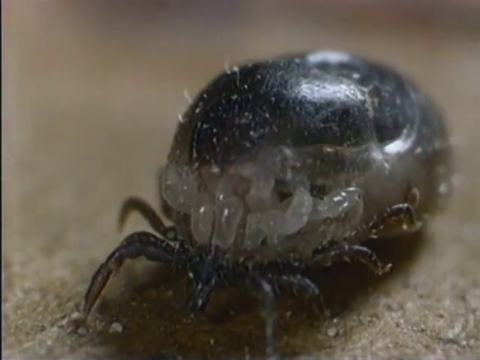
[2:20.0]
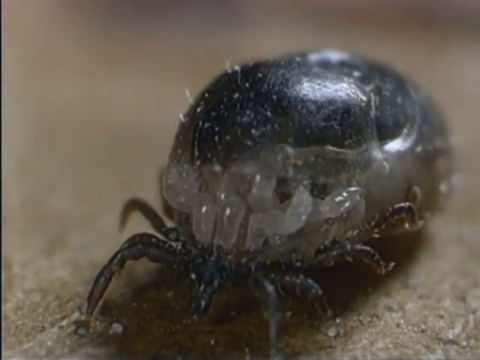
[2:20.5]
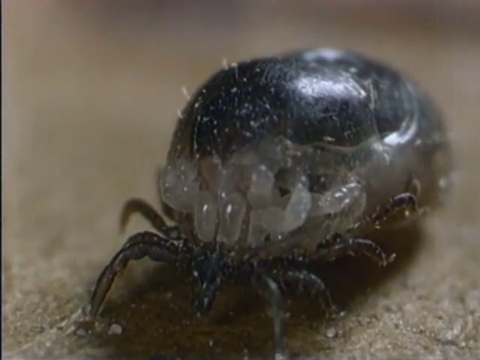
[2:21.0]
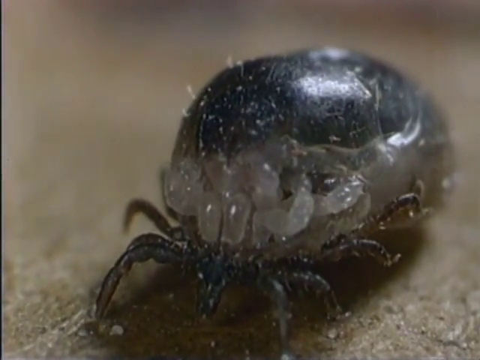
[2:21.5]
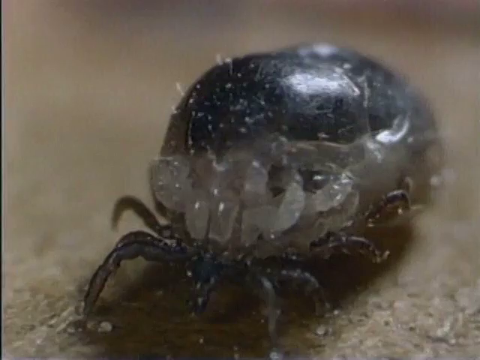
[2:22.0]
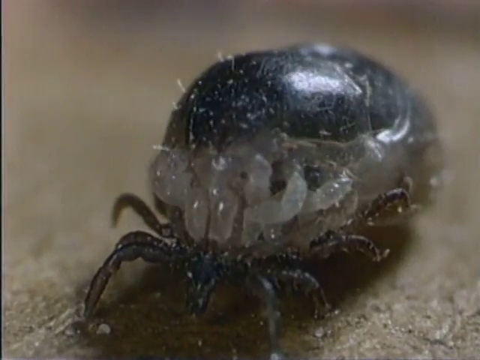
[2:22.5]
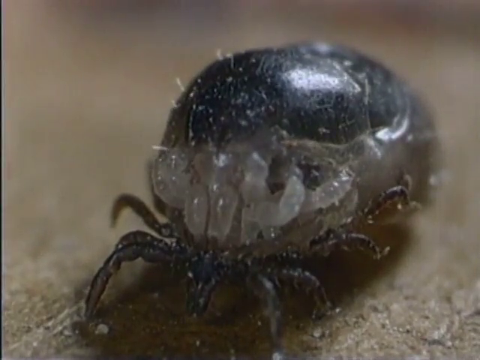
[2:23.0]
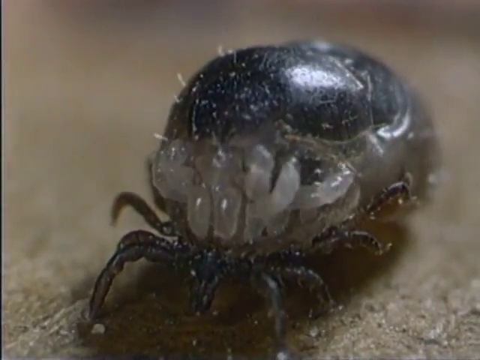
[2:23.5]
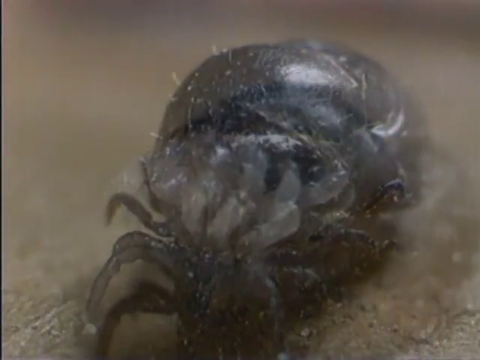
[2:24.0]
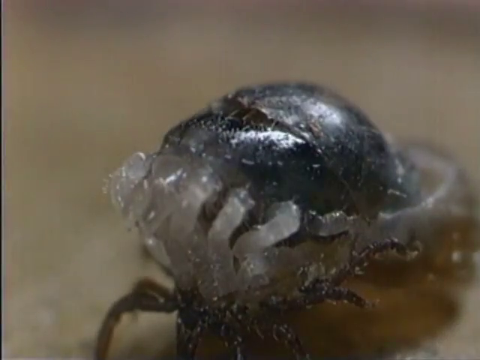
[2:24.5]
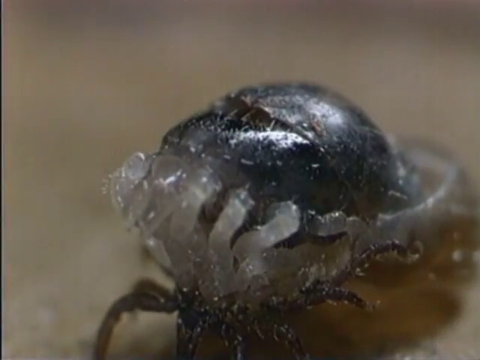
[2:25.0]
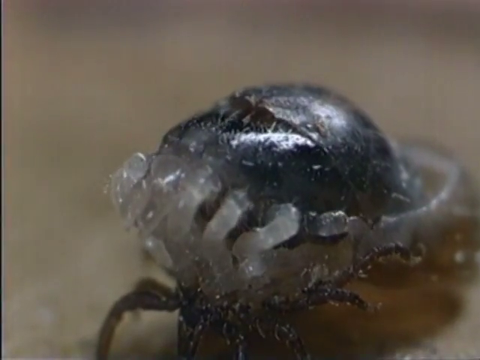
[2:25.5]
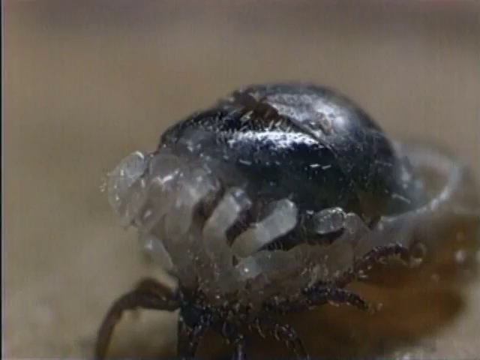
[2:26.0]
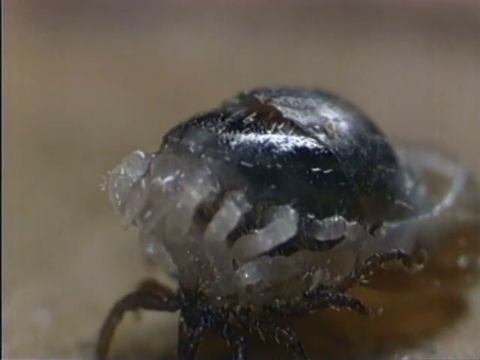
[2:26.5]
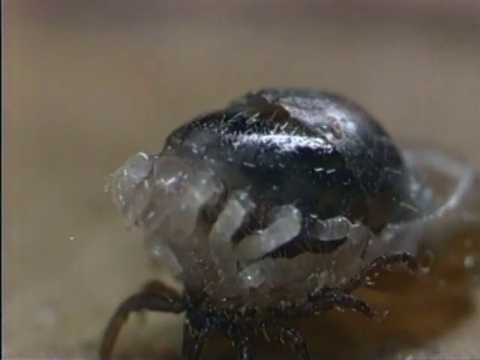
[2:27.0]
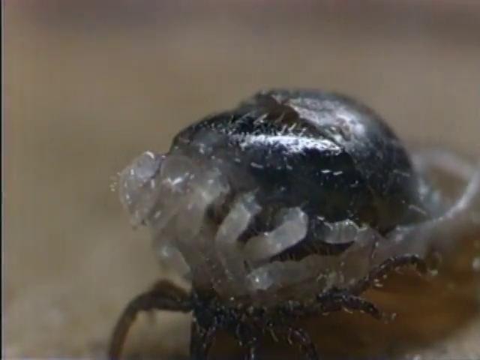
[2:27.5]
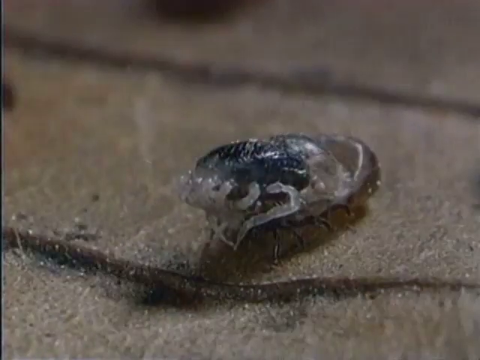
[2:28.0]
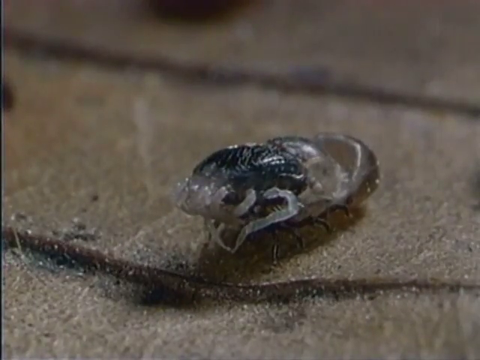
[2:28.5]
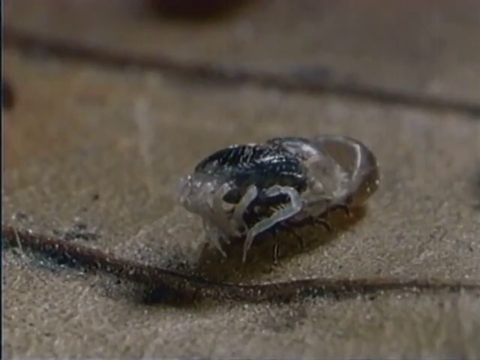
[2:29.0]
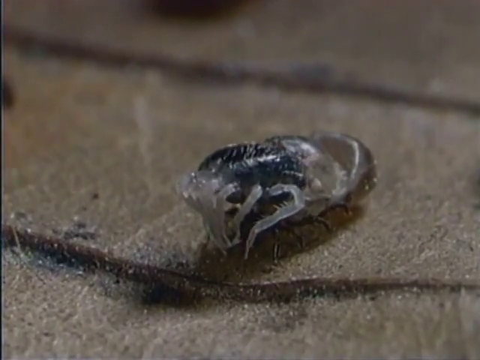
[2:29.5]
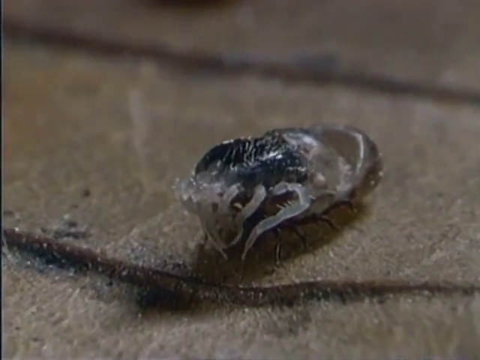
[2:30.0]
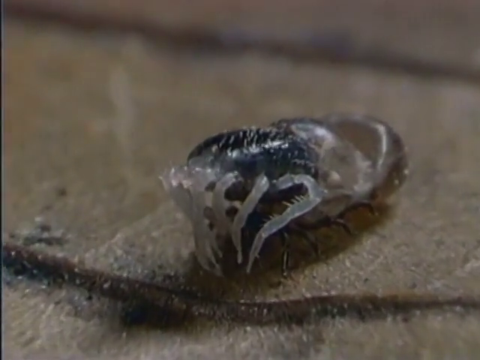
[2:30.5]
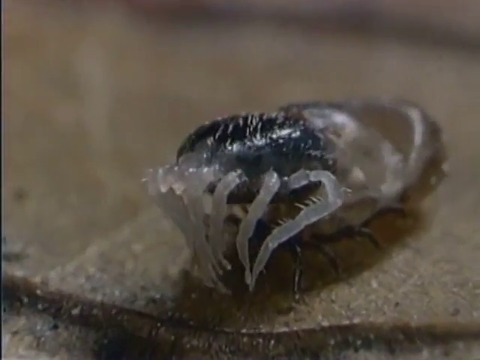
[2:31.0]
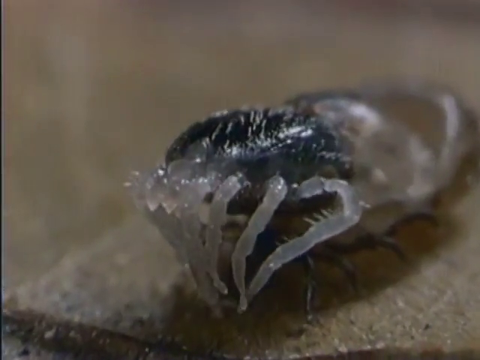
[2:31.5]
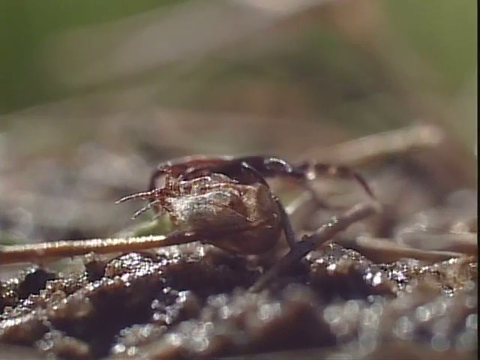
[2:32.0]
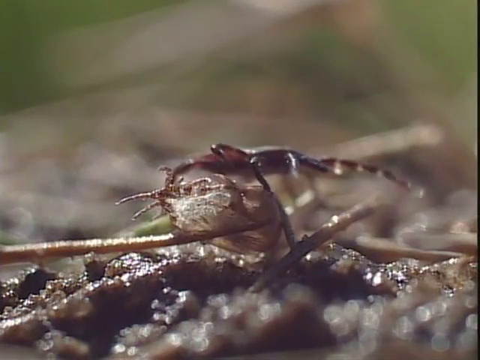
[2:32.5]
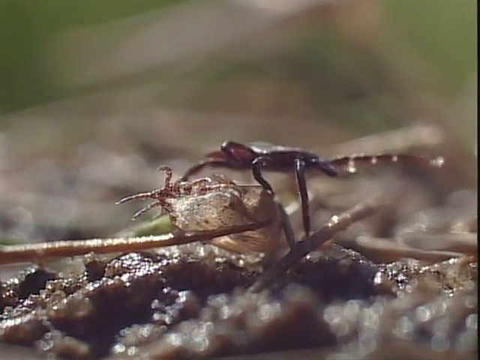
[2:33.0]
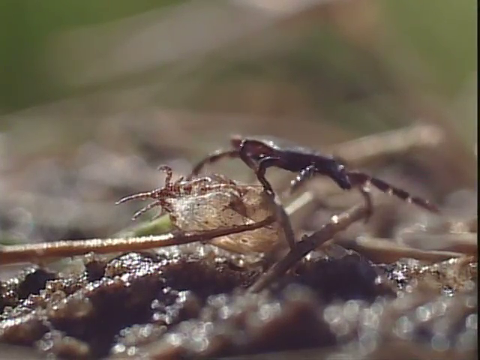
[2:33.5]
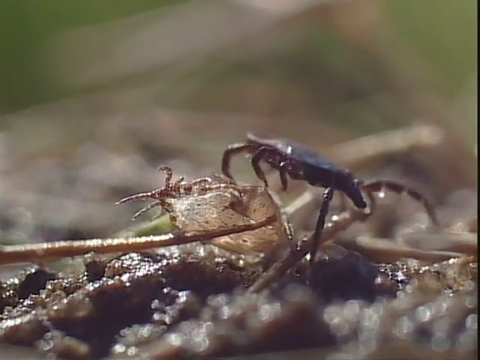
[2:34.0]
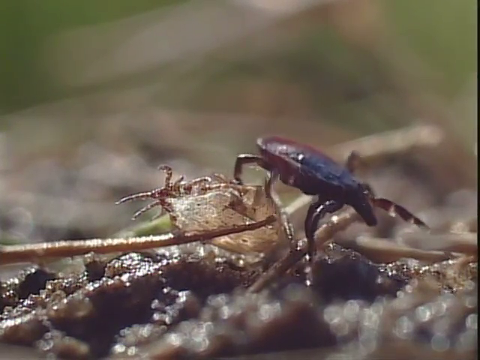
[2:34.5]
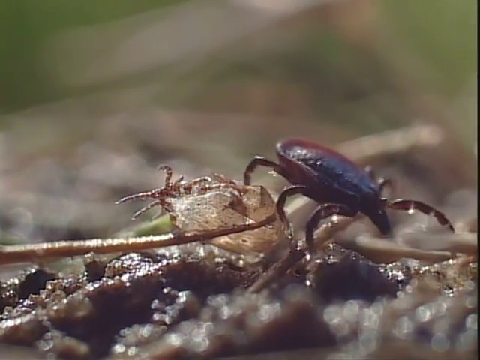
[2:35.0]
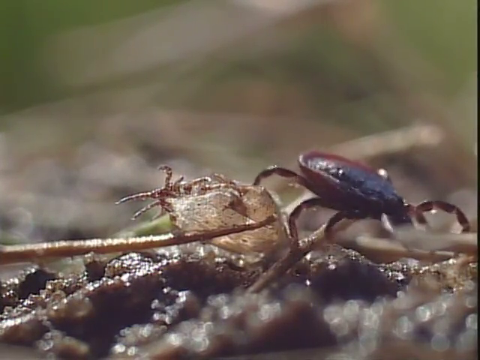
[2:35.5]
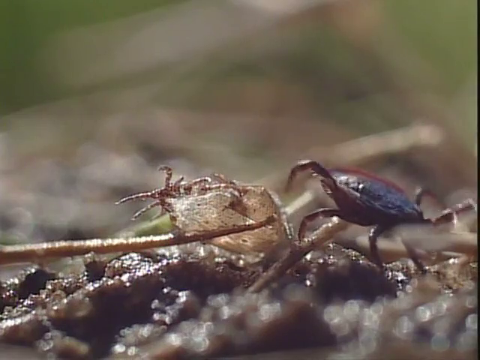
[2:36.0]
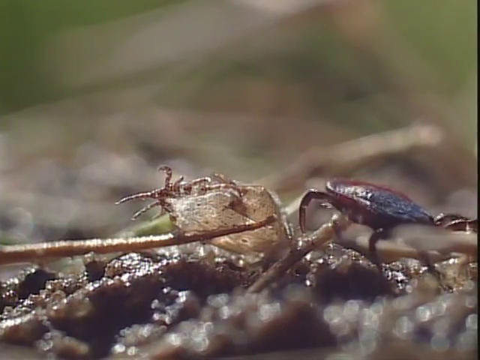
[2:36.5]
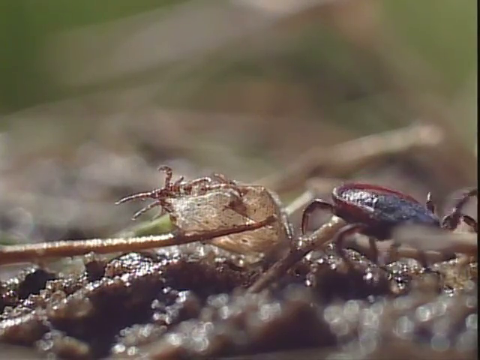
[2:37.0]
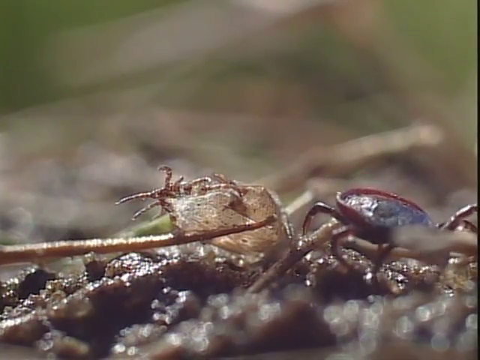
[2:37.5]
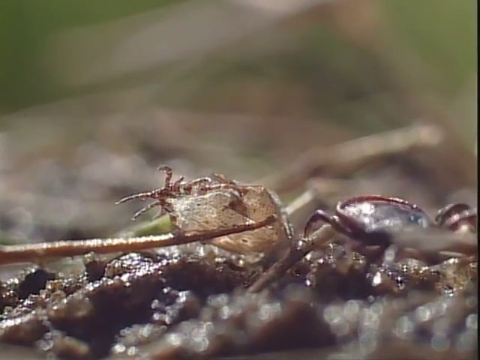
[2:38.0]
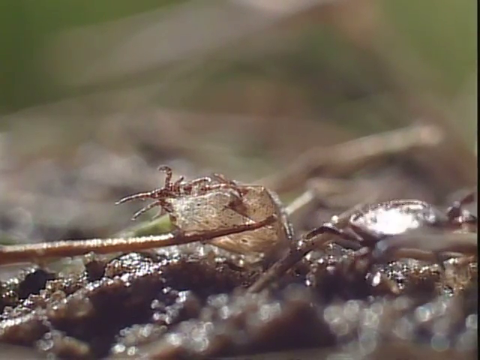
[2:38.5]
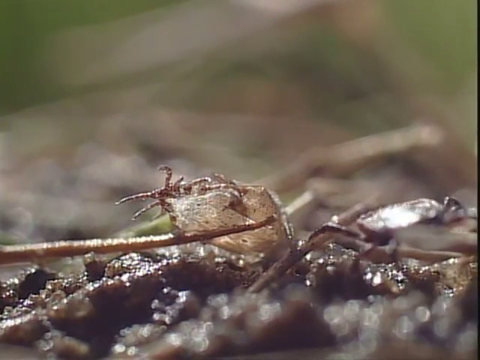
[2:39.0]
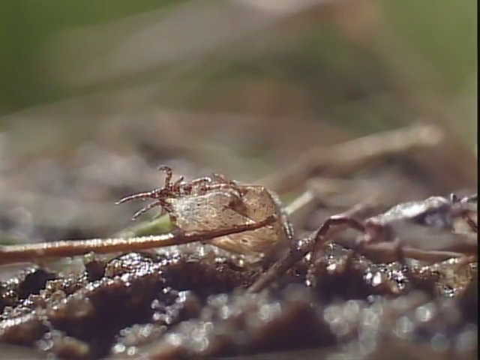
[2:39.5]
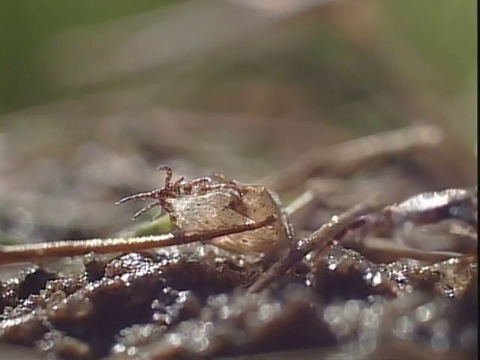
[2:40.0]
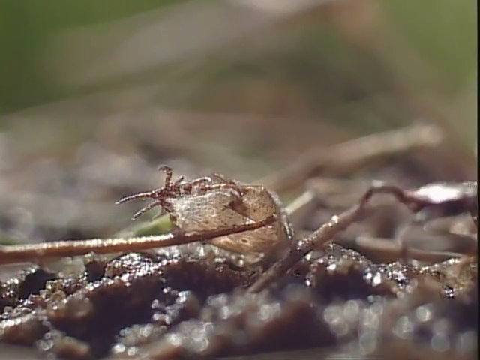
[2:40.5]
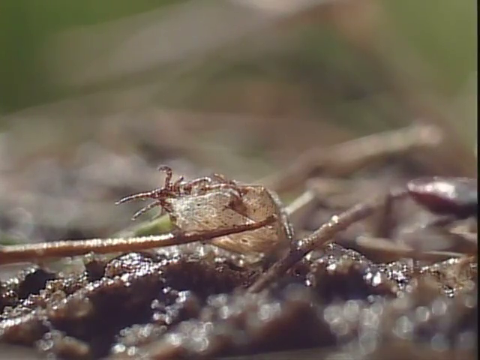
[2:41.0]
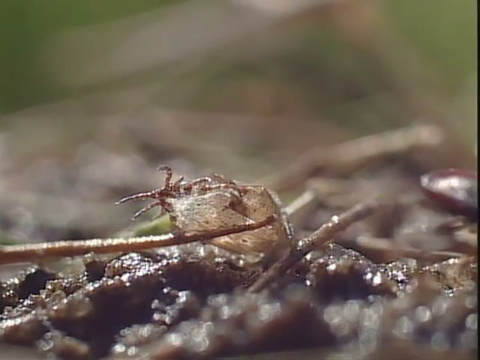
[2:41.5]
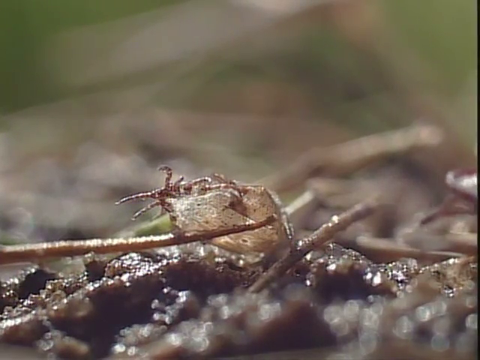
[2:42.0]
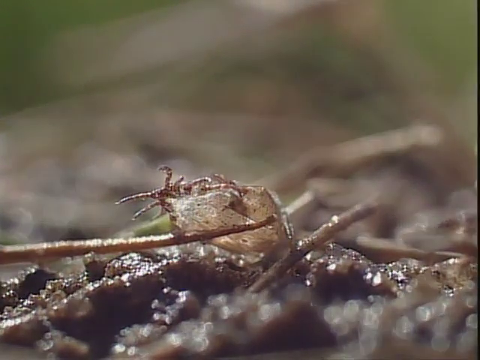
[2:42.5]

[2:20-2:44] The tick looks gorged on its host, its body massive and engorged with blood. It then molts its skin, coming out of its exoskeleton much bigger, like a crab molting. It emerges from the molt looking bigger and flatter, then walks away on the ground, leaving its previous exoskeleton there.